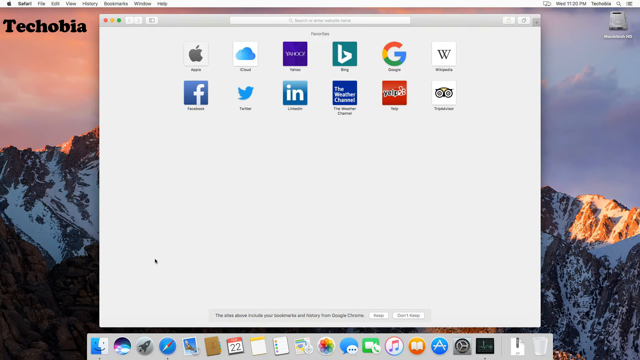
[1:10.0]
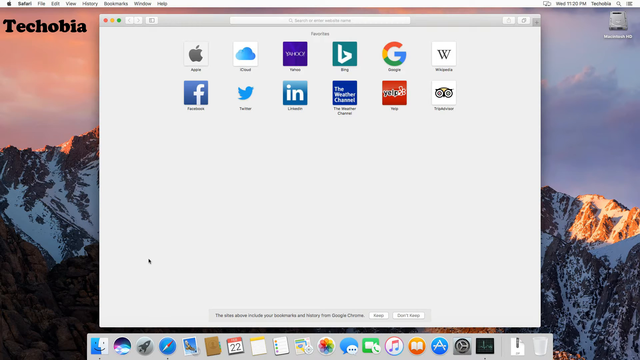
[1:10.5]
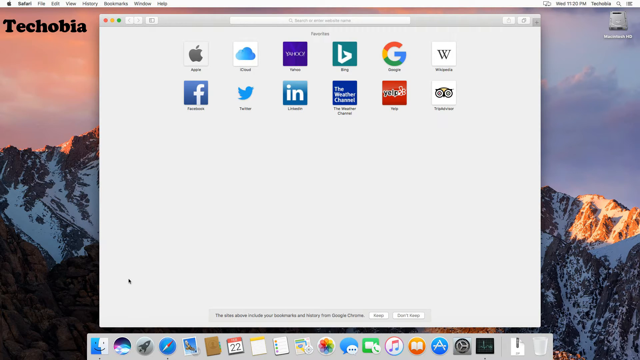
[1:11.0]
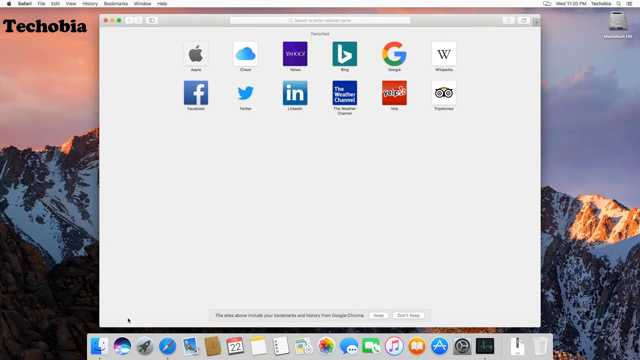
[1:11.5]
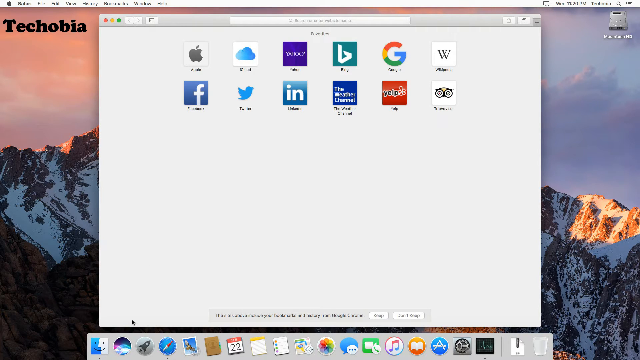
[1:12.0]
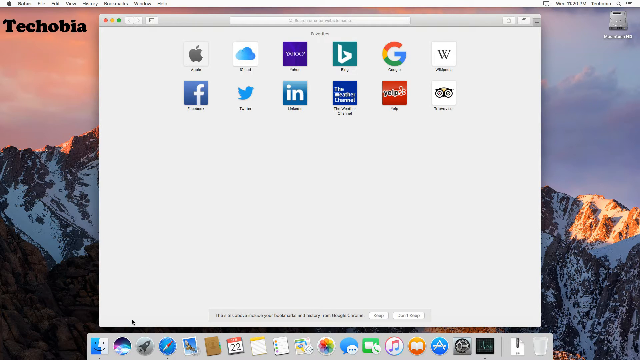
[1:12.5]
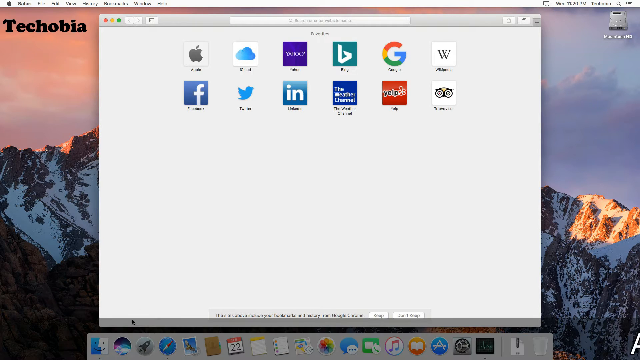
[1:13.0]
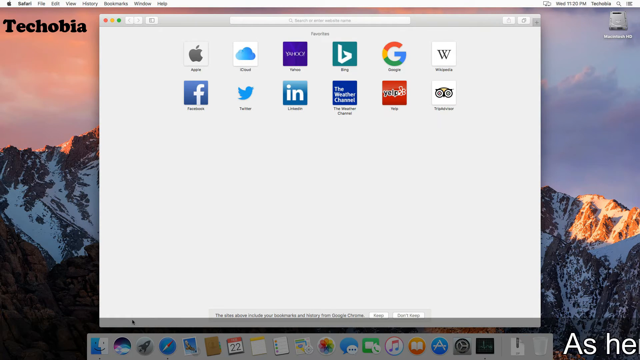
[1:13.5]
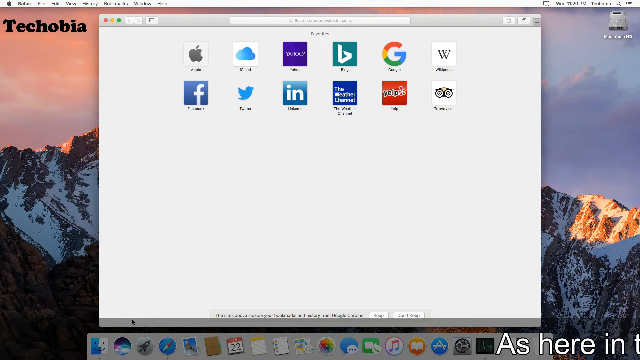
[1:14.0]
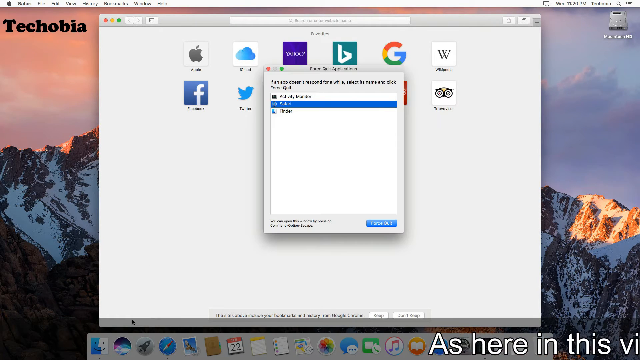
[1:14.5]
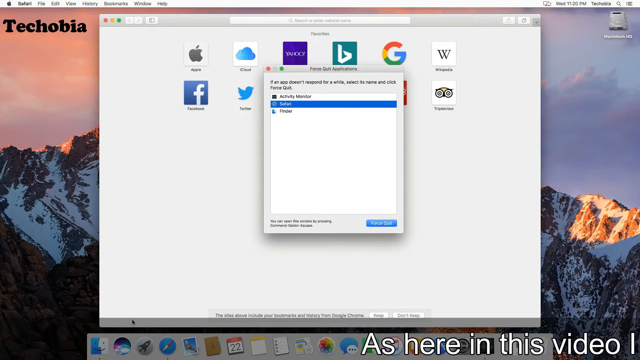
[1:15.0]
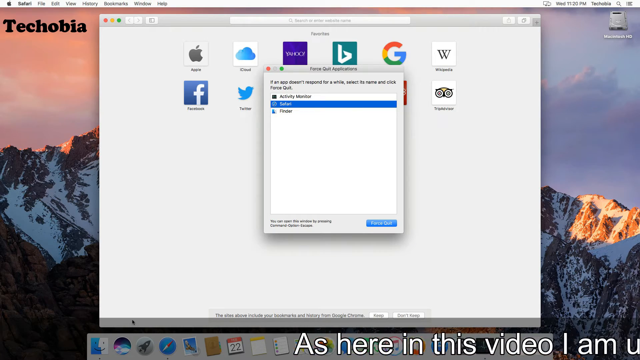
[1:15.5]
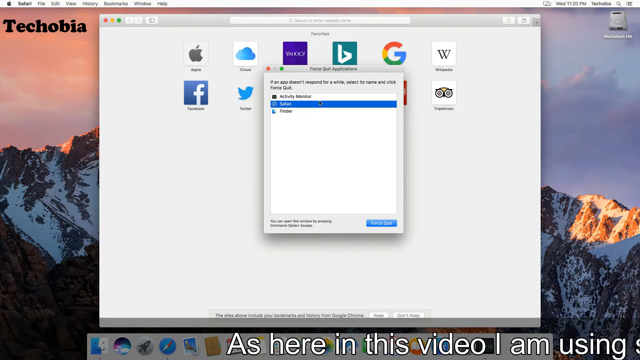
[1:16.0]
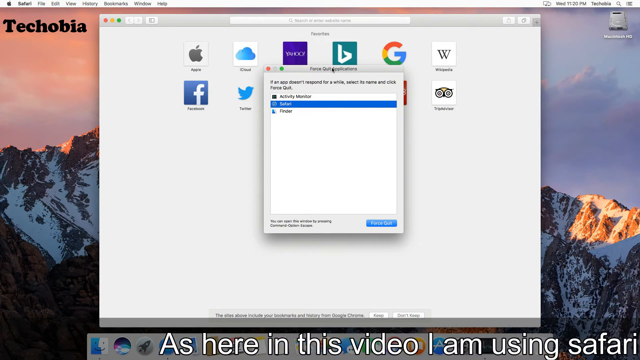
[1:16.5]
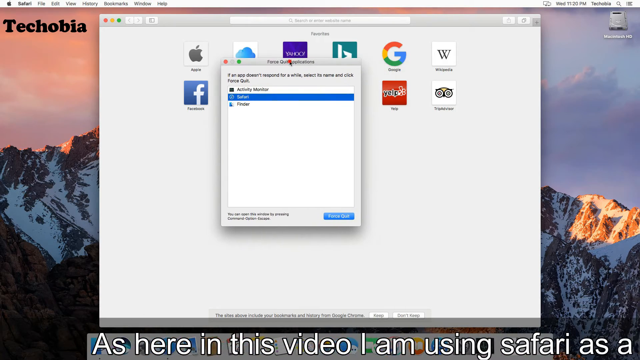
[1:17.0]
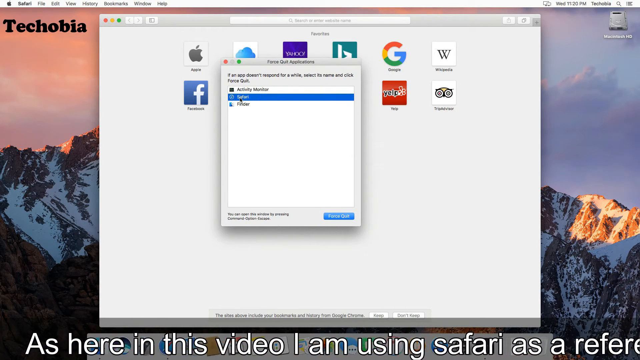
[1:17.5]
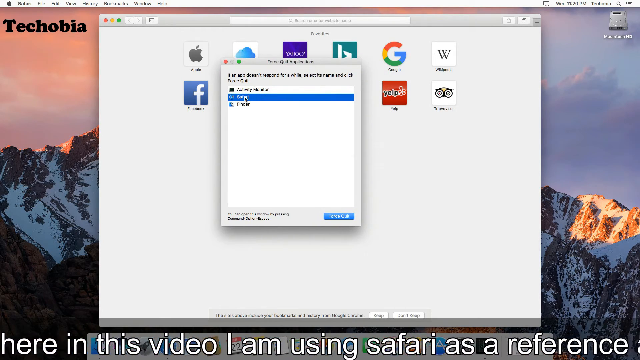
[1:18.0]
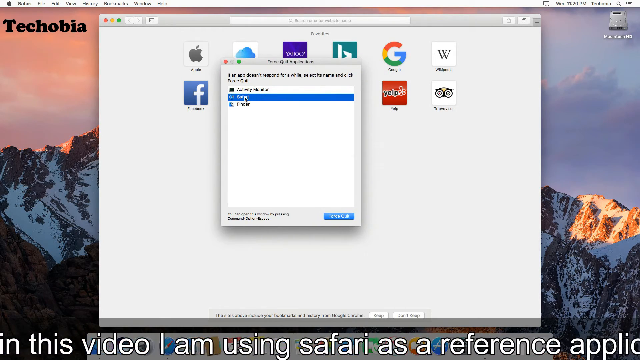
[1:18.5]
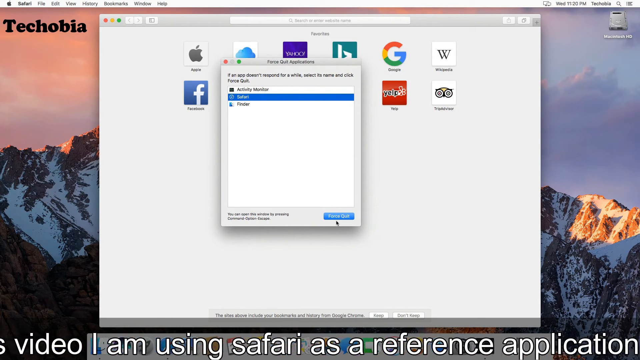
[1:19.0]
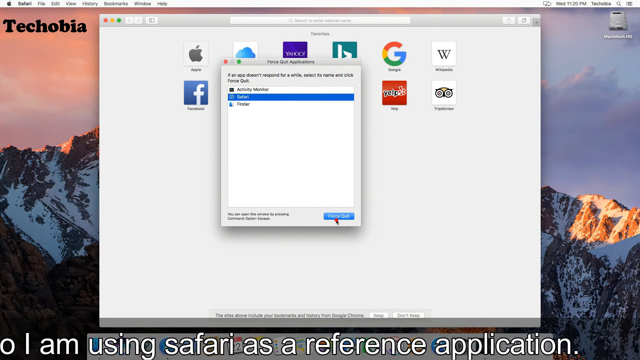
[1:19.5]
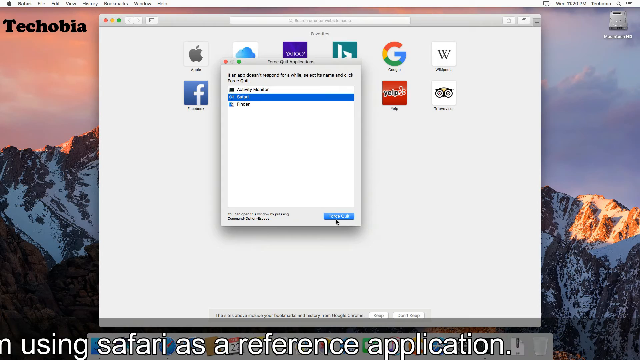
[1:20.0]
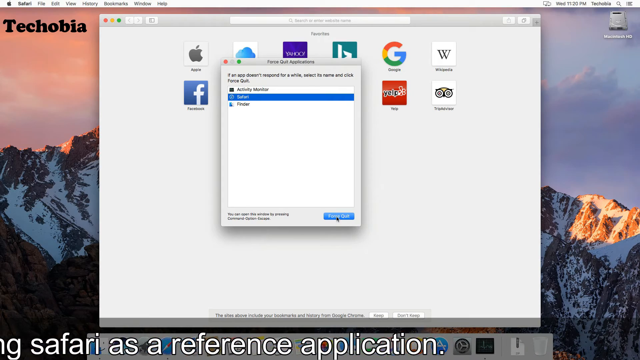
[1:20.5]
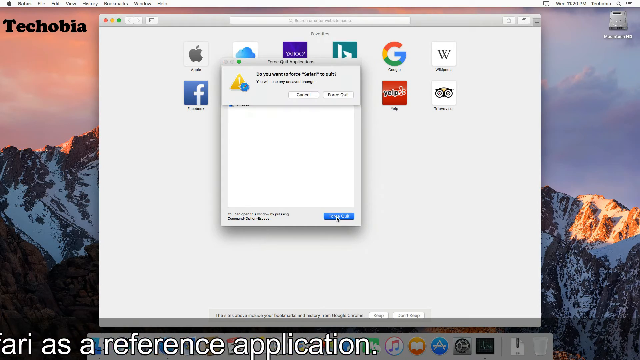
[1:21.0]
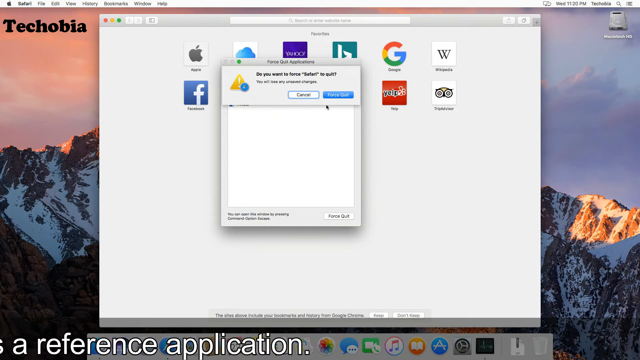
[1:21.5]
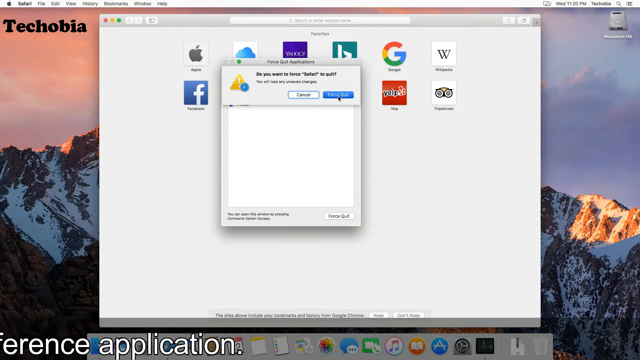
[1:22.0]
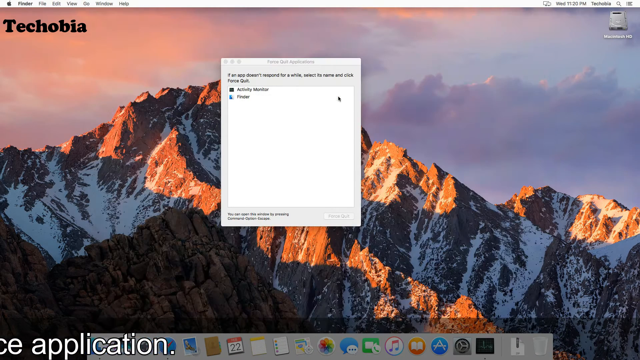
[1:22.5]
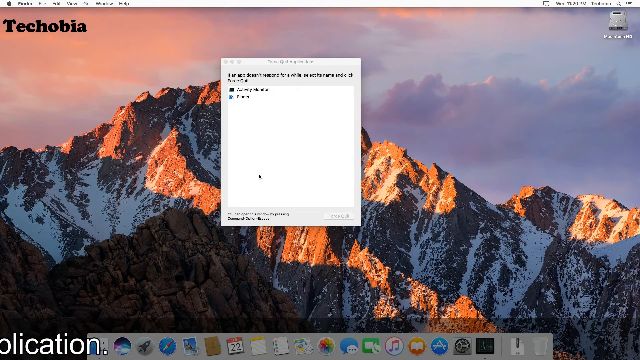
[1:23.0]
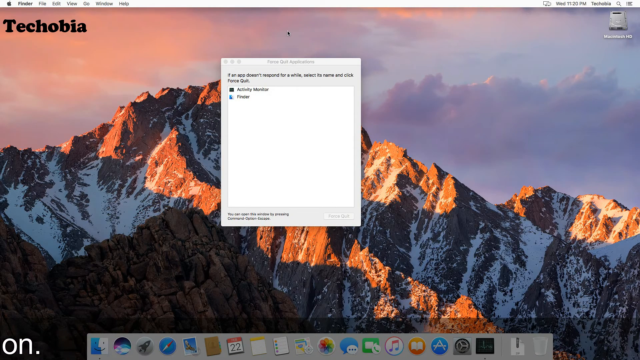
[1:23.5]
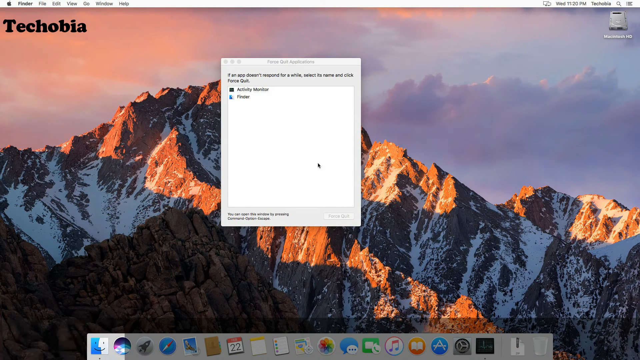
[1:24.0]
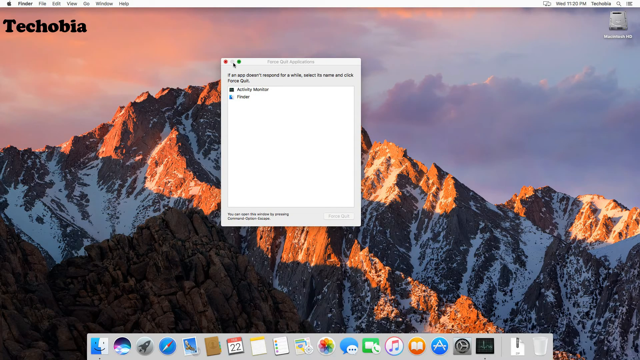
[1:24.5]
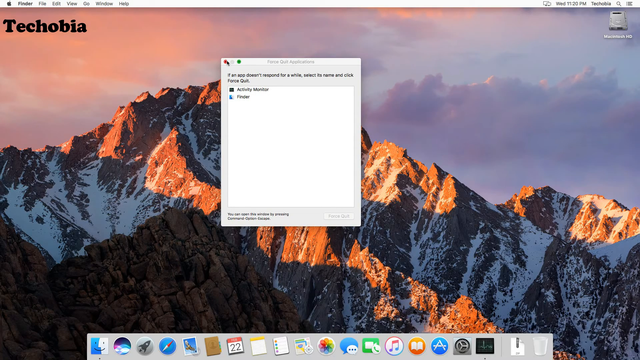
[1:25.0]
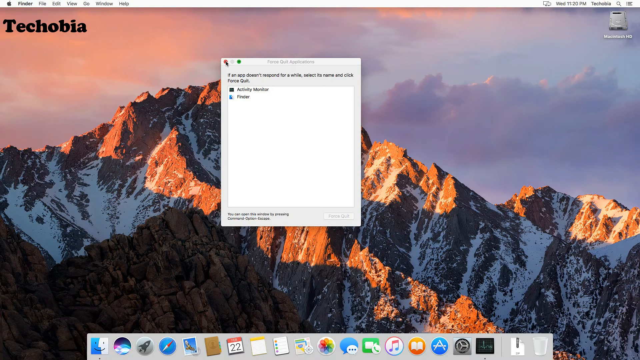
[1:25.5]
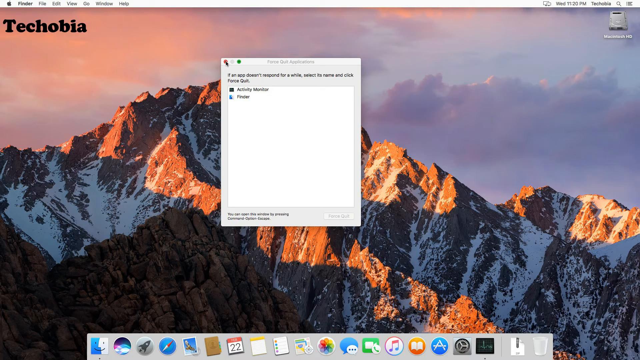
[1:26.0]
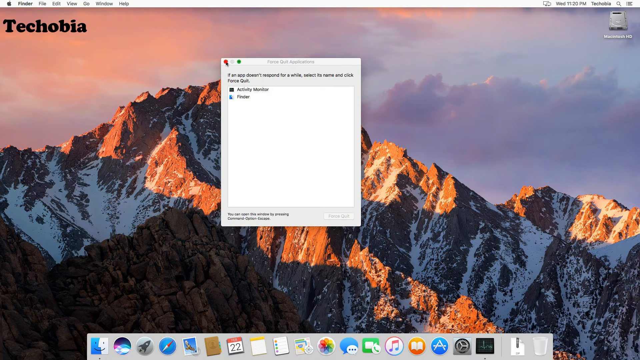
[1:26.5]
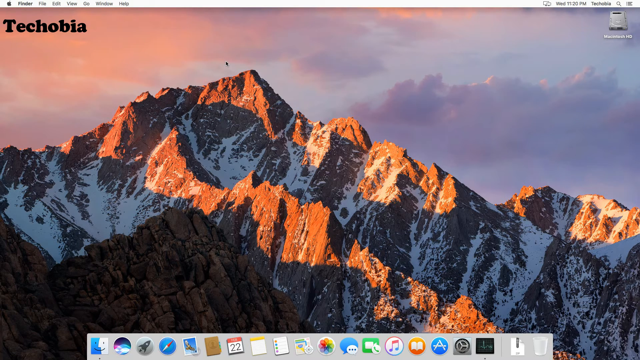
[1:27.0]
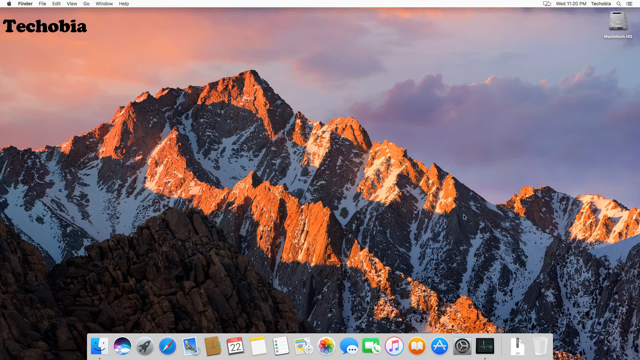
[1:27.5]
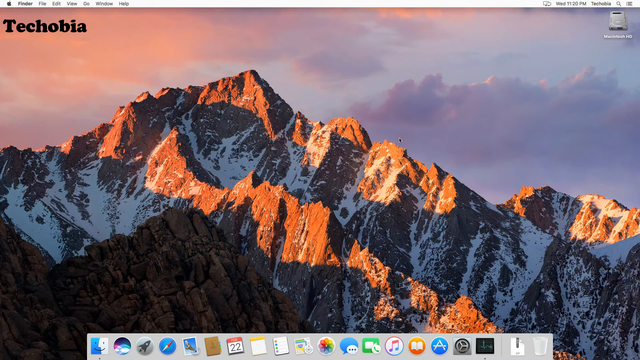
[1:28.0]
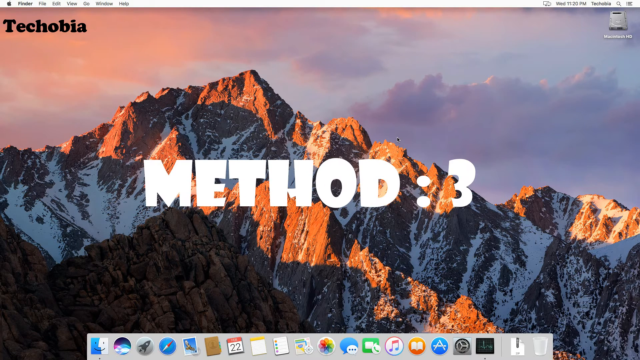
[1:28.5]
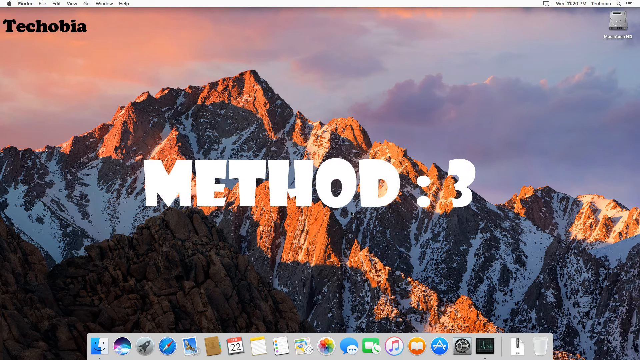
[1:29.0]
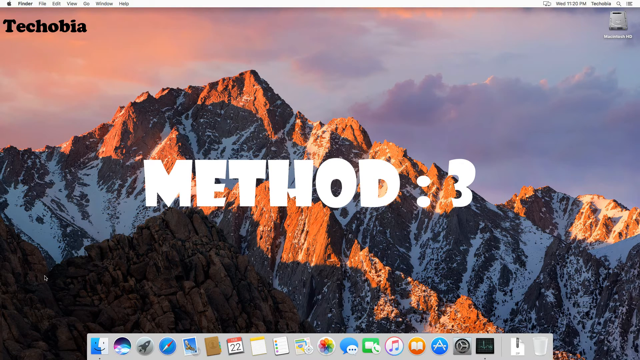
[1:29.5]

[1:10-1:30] The menu is on screen, and a window pops up that says "force quit applications." It says "if an app doesn't respond for a while, select the name and click force quit." The list contains activity monitor, Safari, and what appears to say folder. He selects Safari and then force quit, and a message box pops up asking if he is sure he wants to do it; he hits yes. He circles one of the dialog boxes with the mouse for a few seconds, then minimizes the menu. The words "method three" then come on the screen.